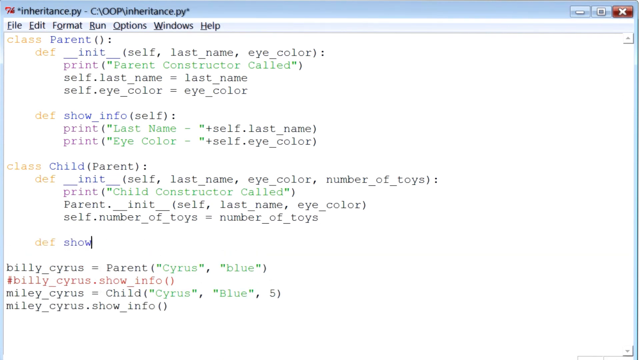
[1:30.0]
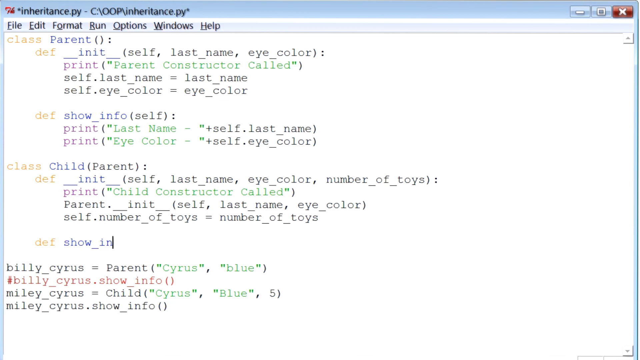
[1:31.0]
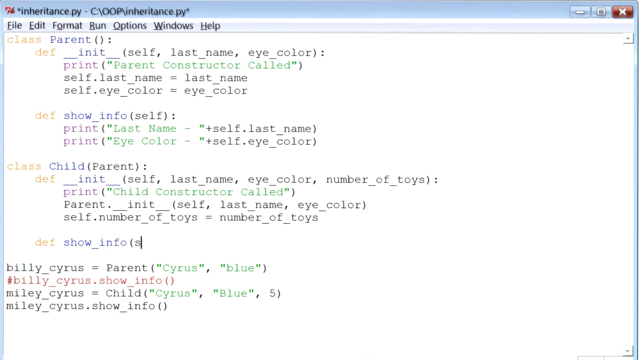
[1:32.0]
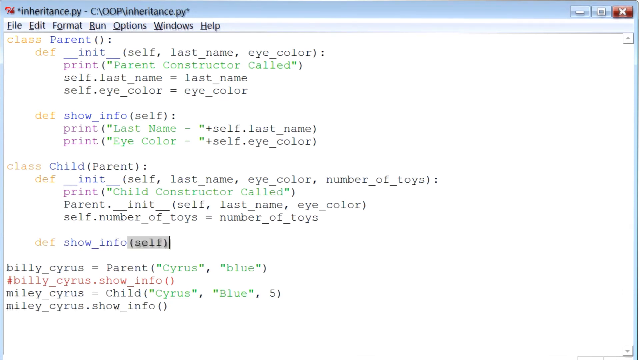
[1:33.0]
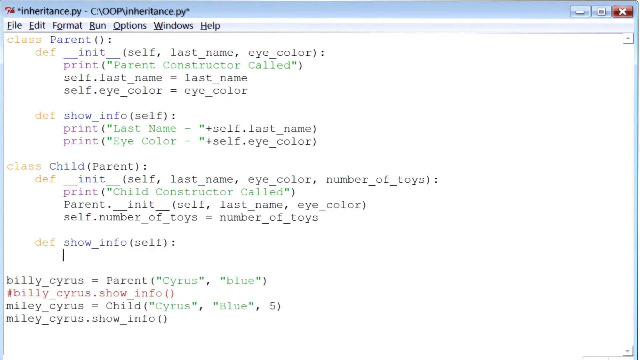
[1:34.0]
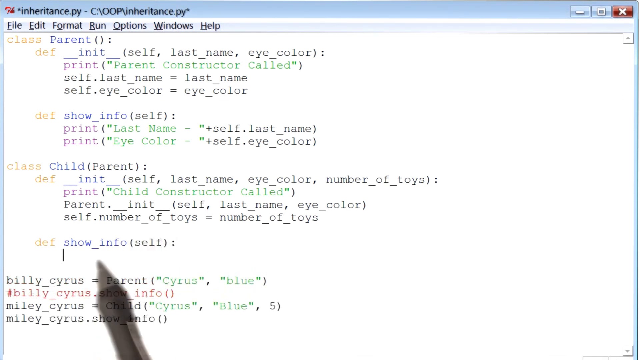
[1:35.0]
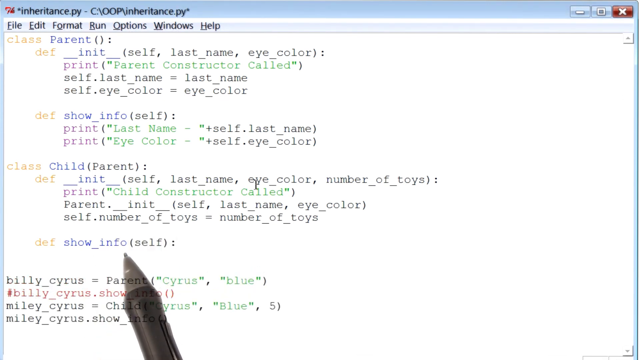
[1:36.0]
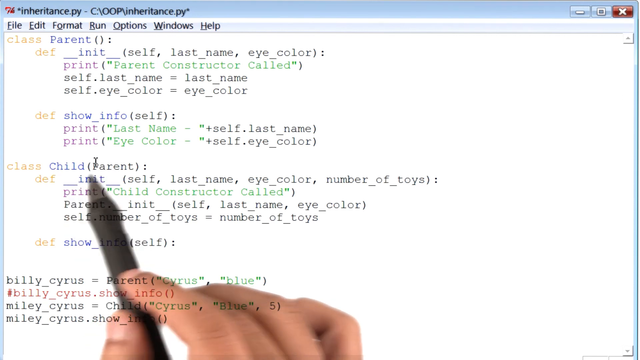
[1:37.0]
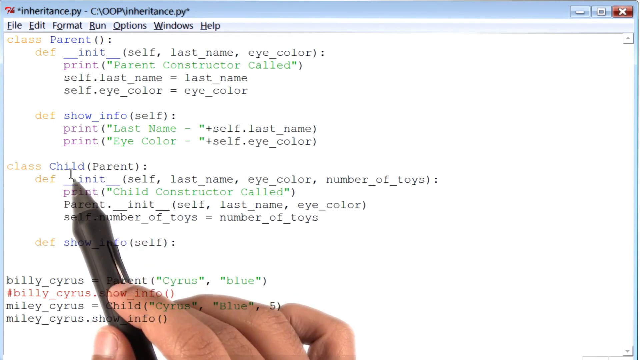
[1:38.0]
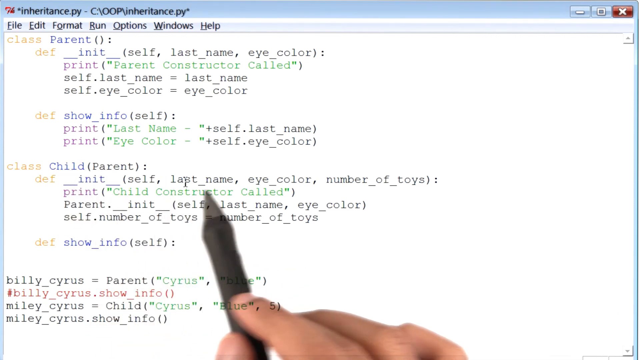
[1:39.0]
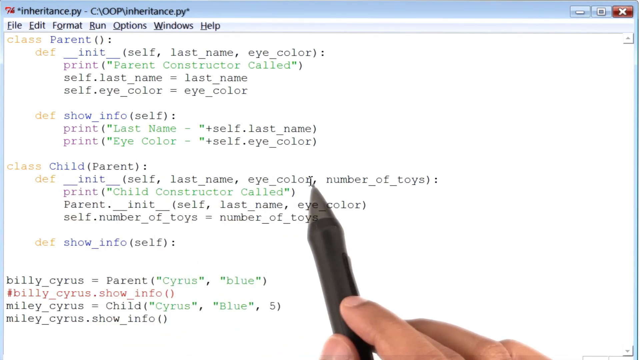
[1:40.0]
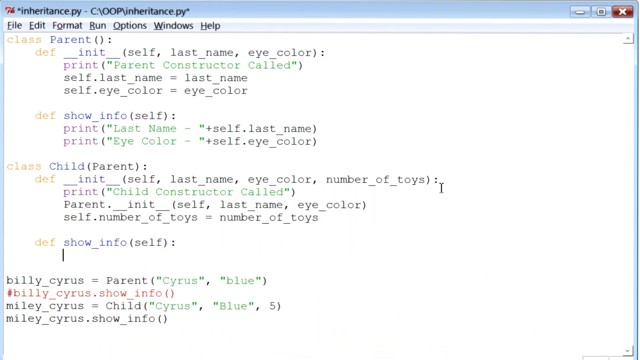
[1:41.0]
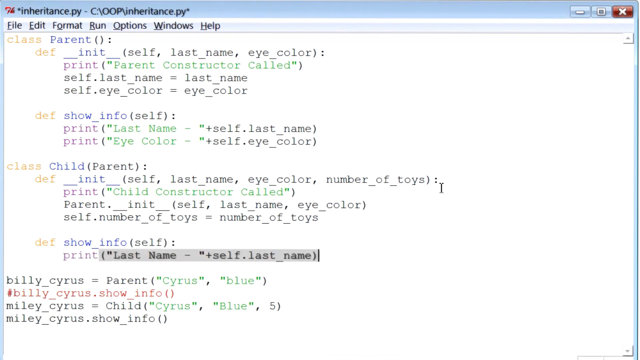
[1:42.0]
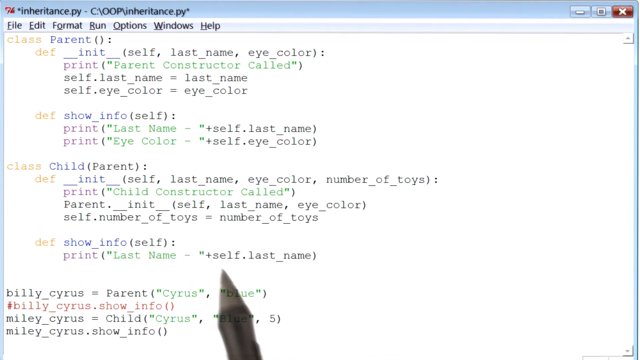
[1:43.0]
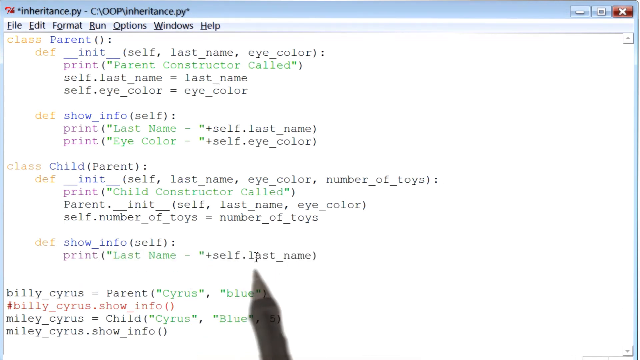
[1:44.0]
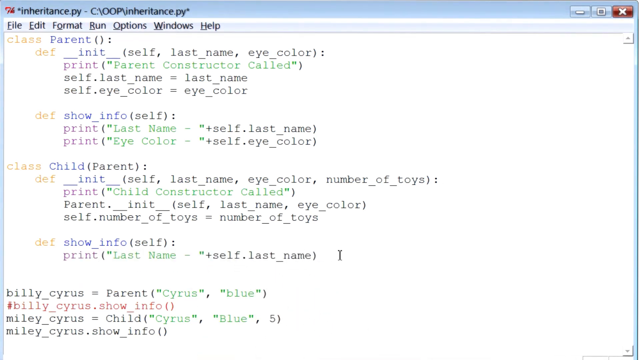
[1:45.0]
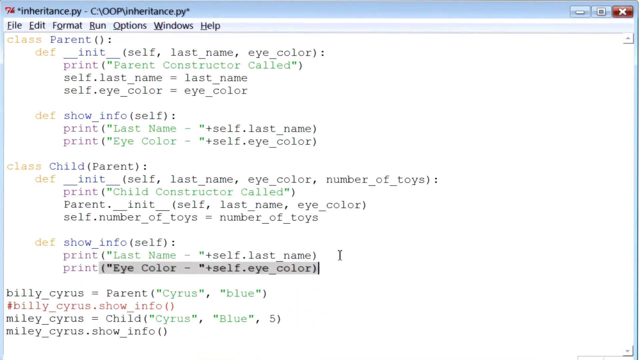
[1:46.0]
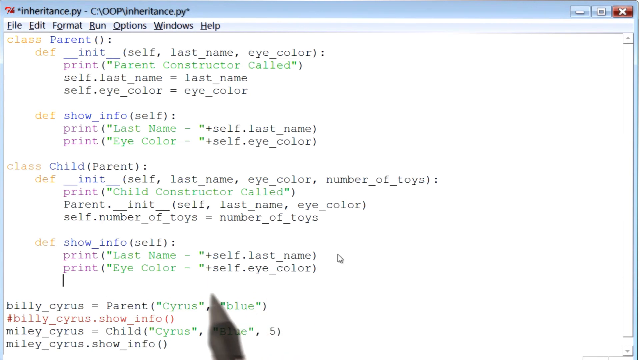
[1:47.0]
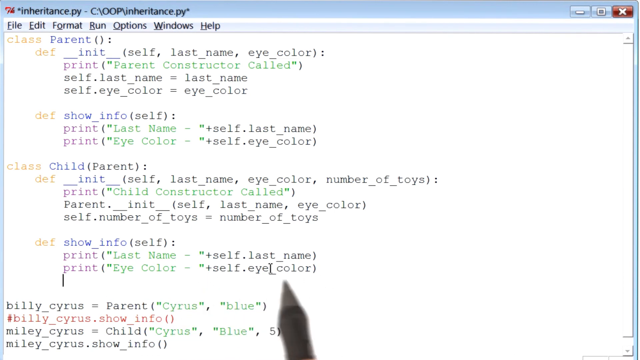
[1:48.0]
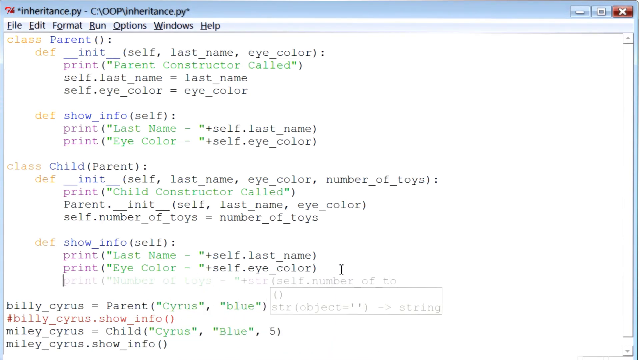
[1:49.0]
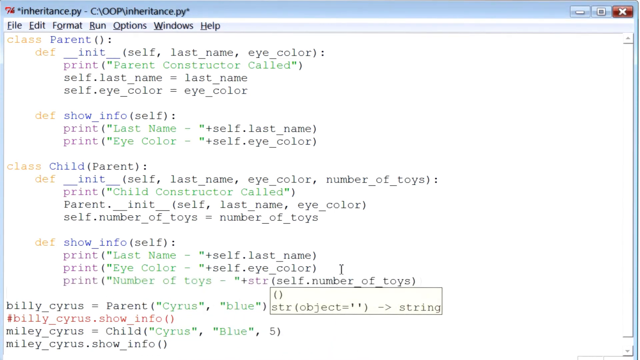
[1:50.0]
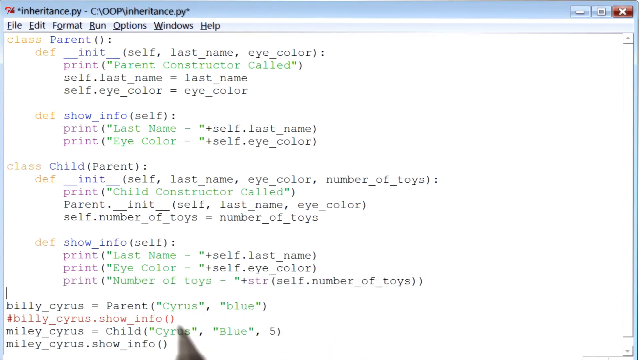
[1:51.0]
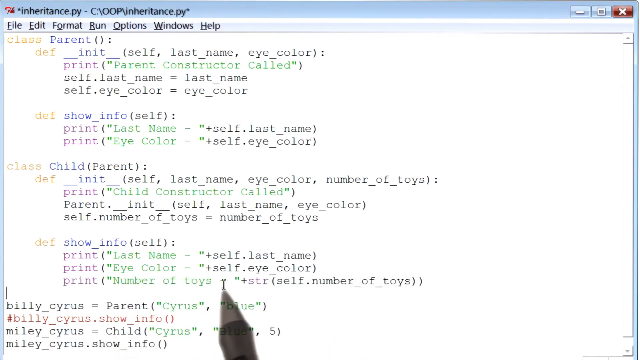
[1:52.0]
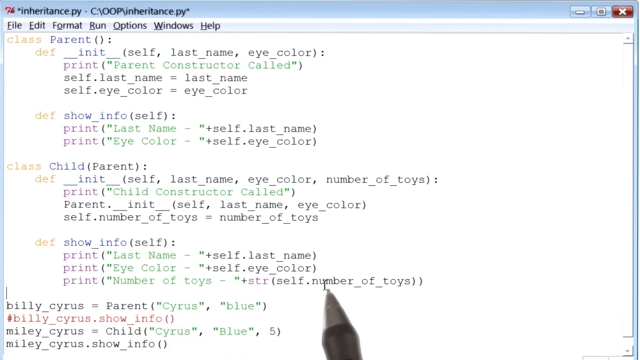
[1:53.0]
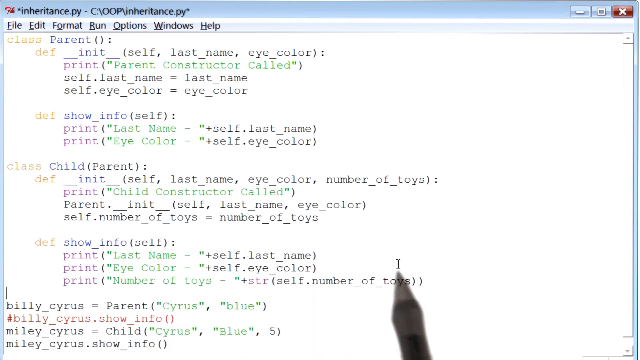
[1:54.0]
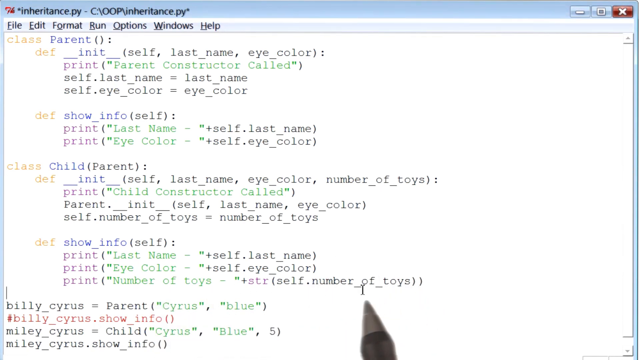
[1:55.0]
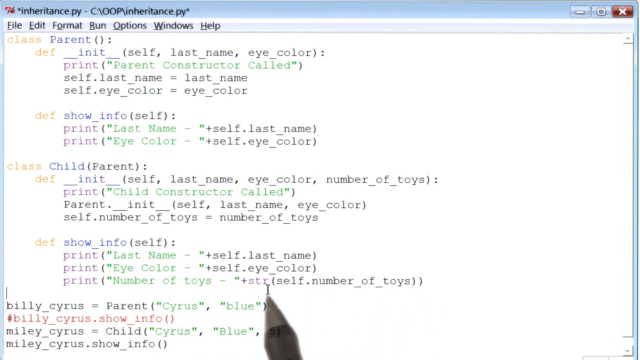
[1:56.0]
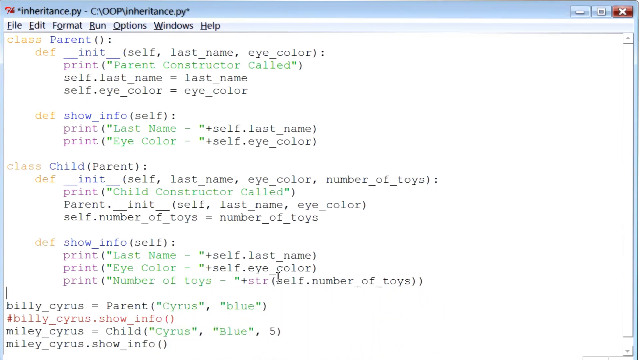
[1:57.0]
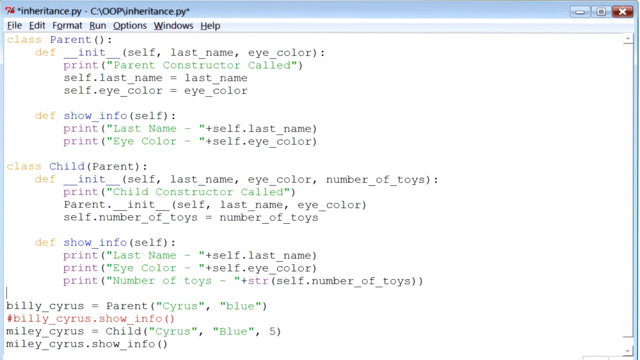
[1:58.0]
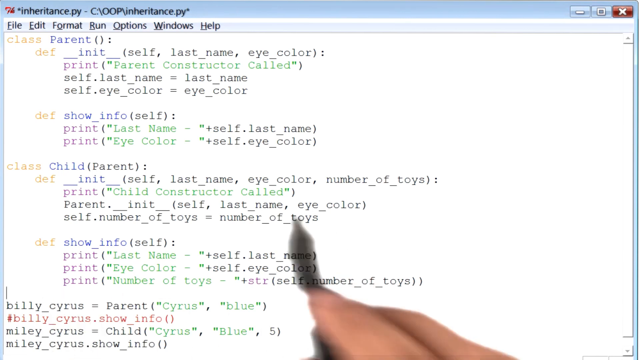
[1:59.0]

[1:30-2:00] Someone is teaching coding in "inheritance.py", a sample of code about the class parent, their name and eye color, and about the child with last name, eye color and number of toys. Billy Cyrus is the sample parent and Miley Cyrus the sample child. A right hand suddenly appears holding a black and silver stylus; it seems to underline and circle things, apparently without really touching the screen. At one point the person clicks the file drop-down menu and Python shows up. They then type a bit more, "show info self", point to it with the stylus, then point to another line and to eye color. More lines appear, such as last name, eye color and number of toys, and the stylus keeps pointing to these lines.